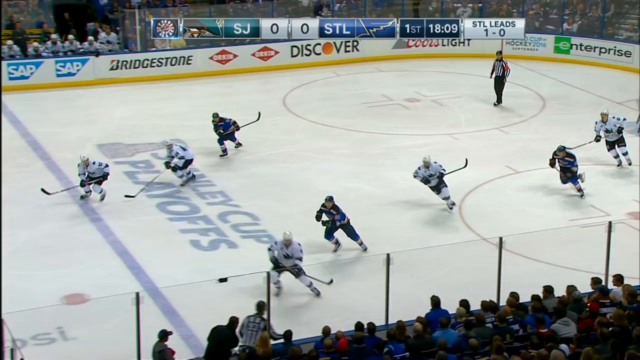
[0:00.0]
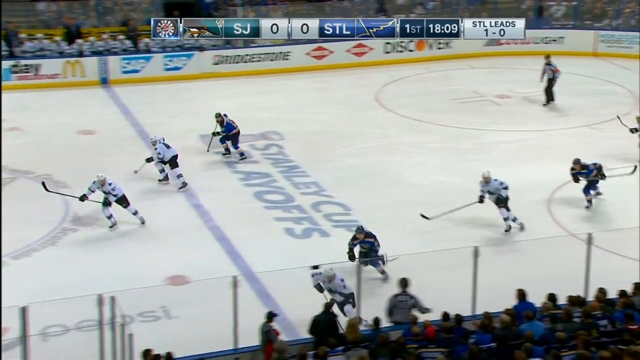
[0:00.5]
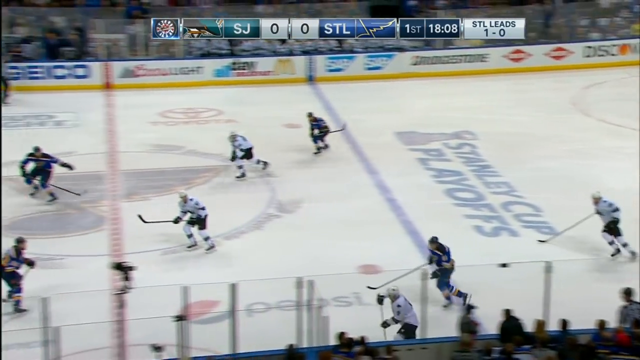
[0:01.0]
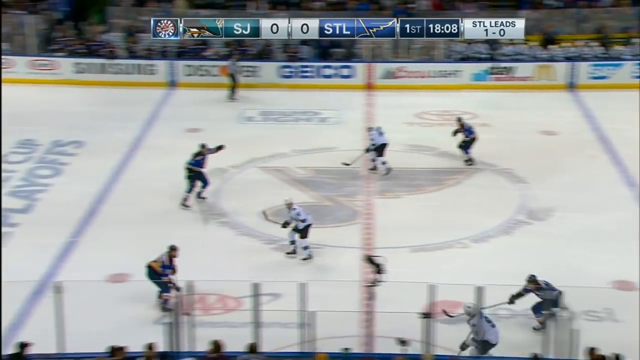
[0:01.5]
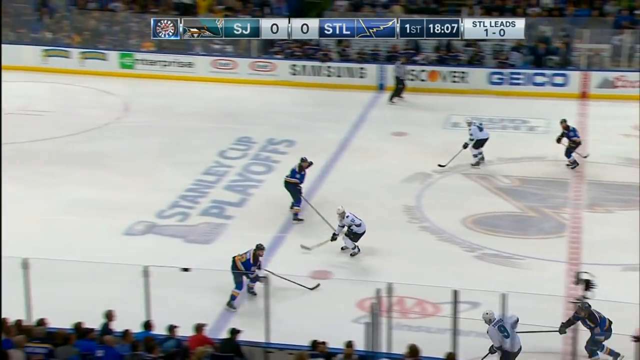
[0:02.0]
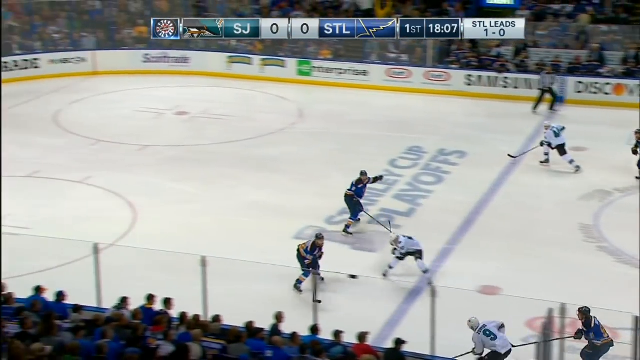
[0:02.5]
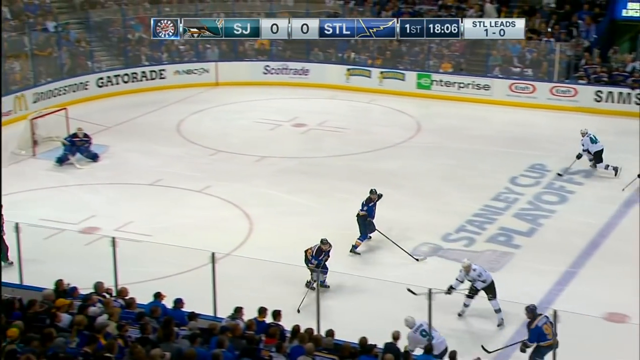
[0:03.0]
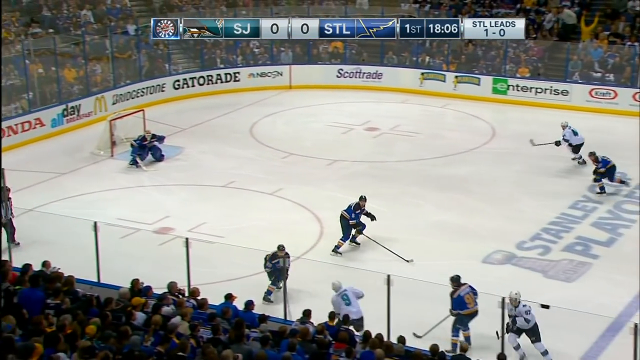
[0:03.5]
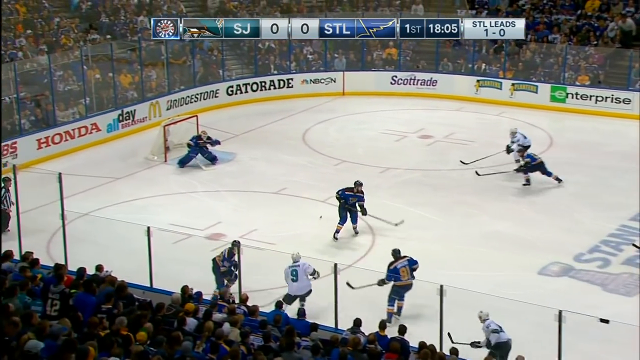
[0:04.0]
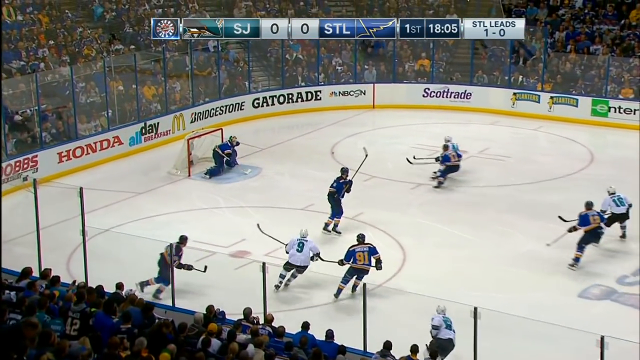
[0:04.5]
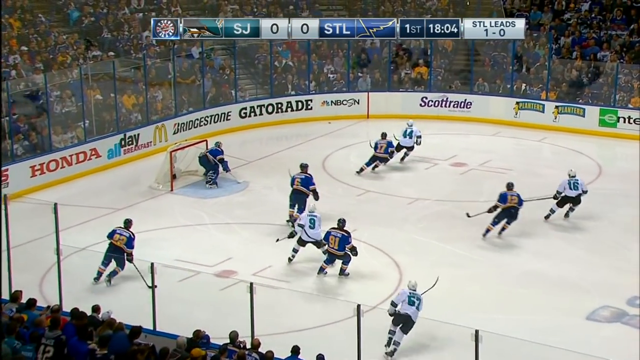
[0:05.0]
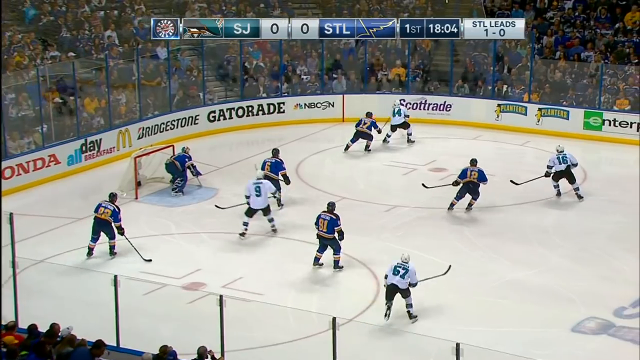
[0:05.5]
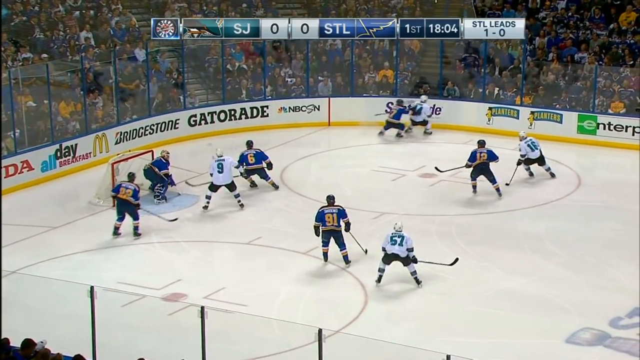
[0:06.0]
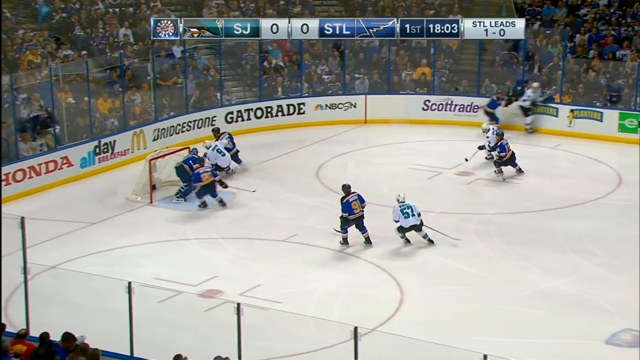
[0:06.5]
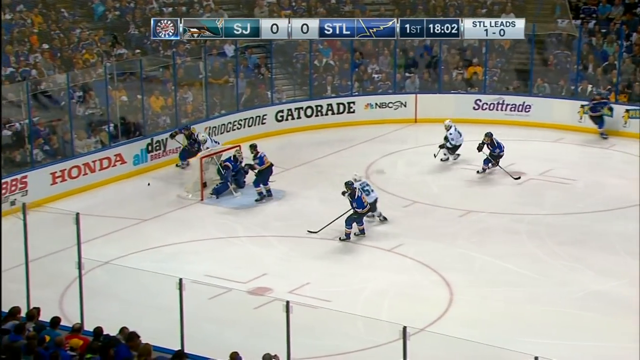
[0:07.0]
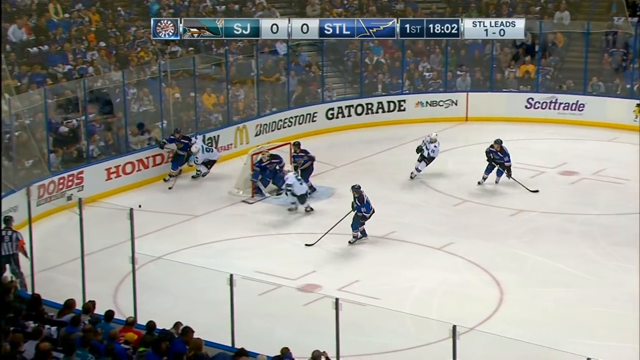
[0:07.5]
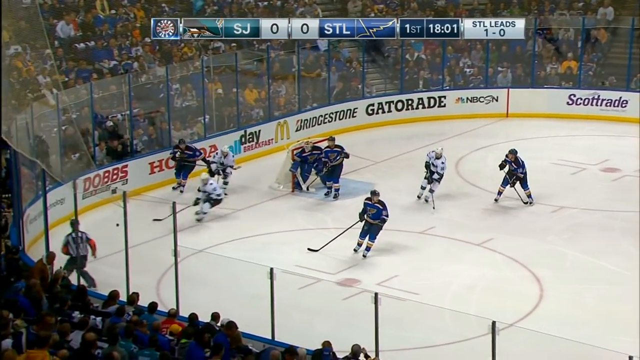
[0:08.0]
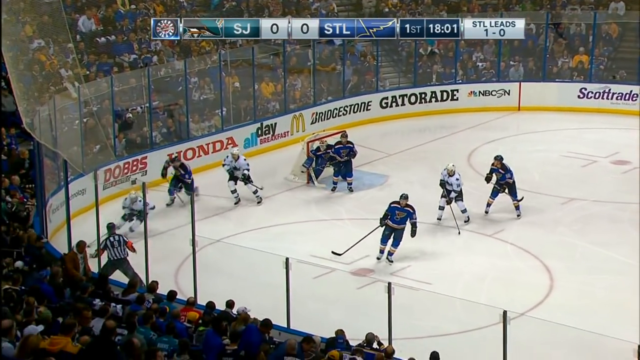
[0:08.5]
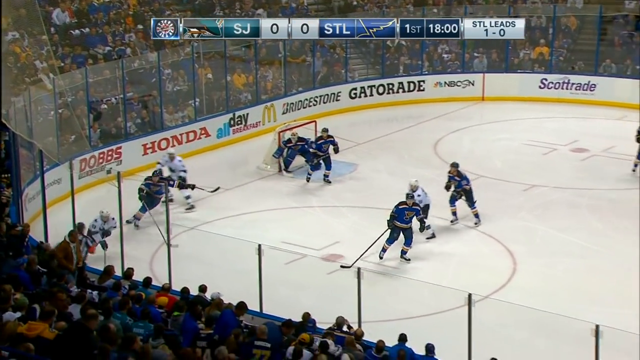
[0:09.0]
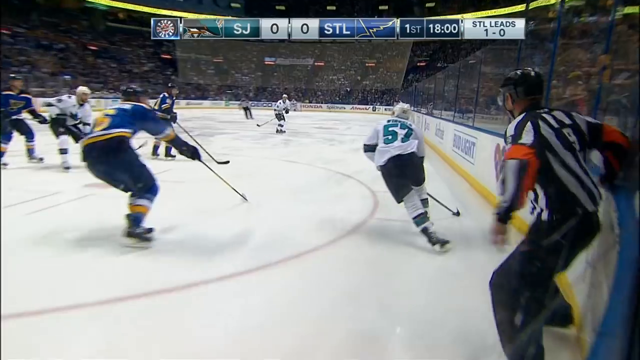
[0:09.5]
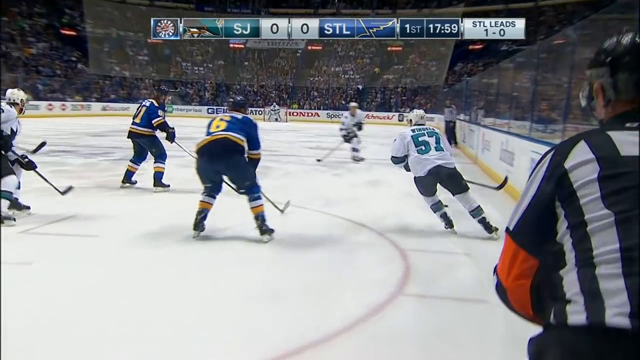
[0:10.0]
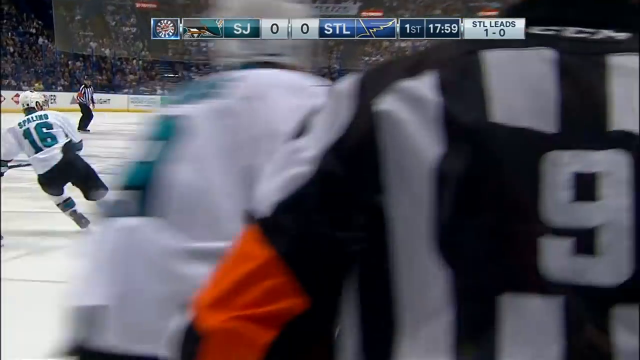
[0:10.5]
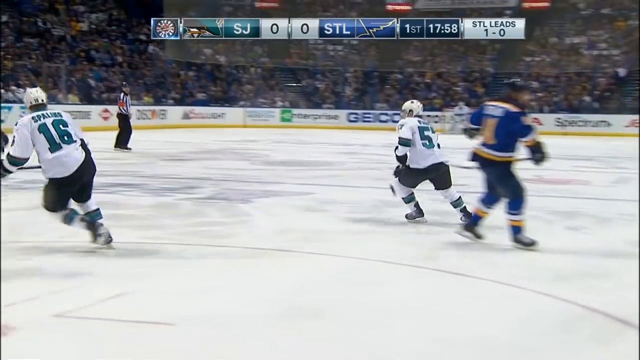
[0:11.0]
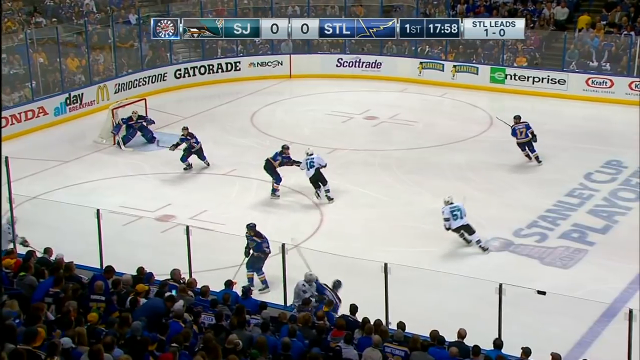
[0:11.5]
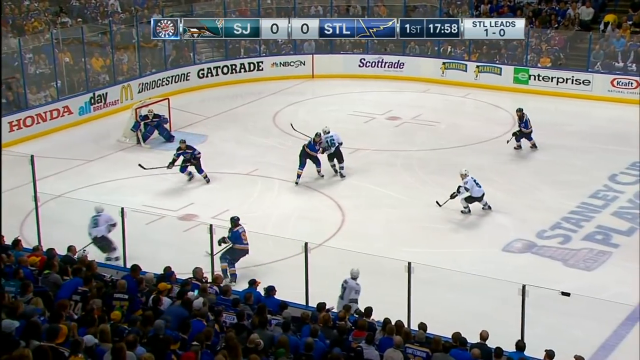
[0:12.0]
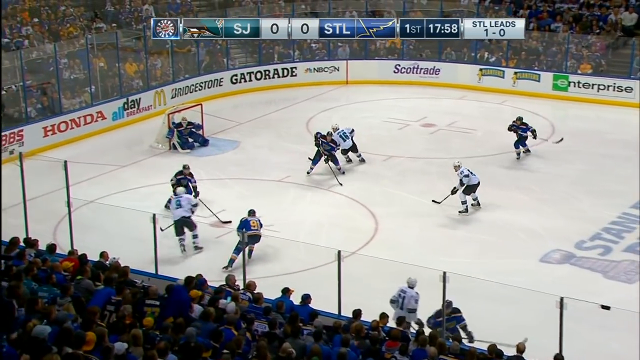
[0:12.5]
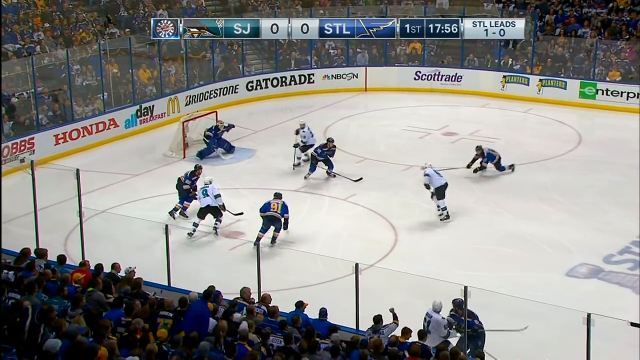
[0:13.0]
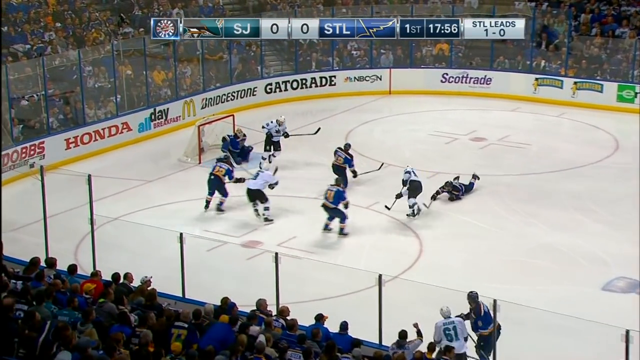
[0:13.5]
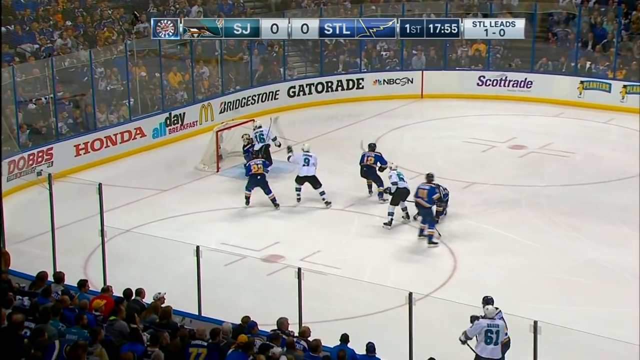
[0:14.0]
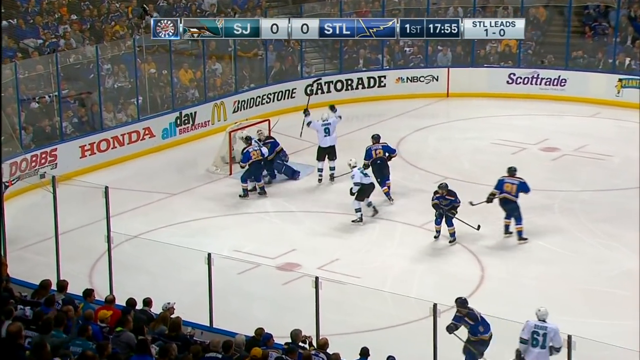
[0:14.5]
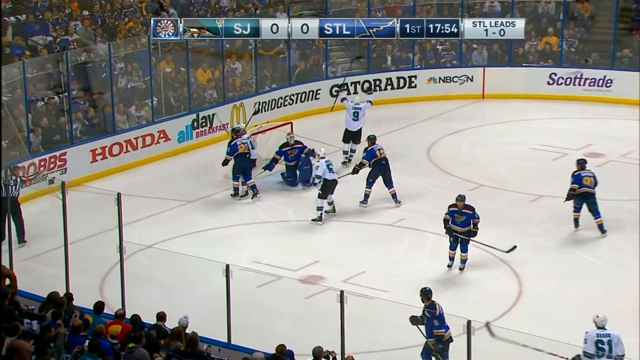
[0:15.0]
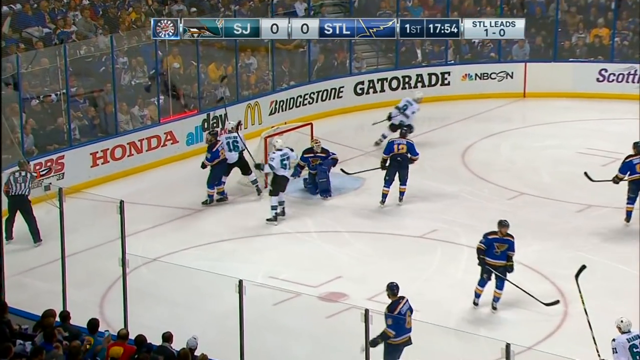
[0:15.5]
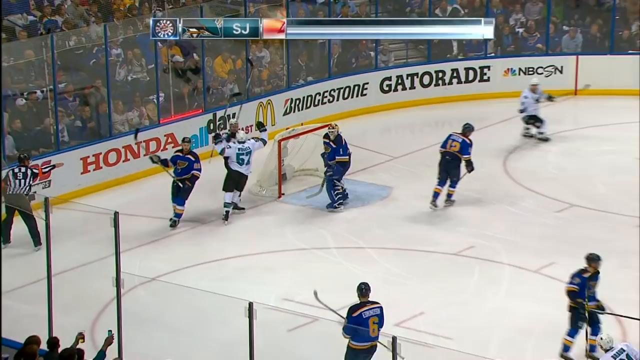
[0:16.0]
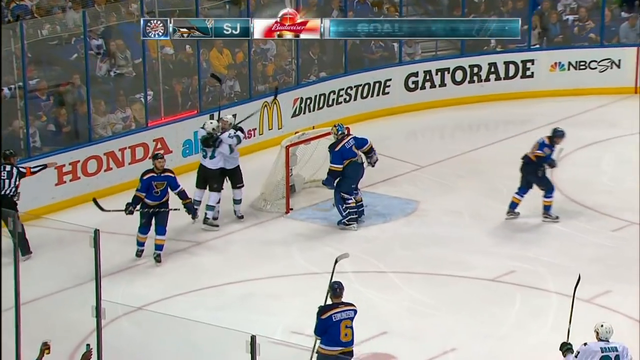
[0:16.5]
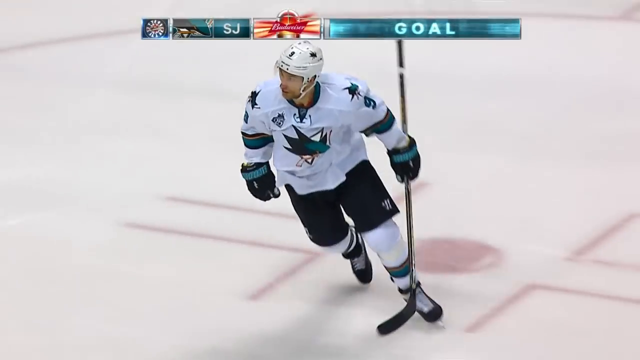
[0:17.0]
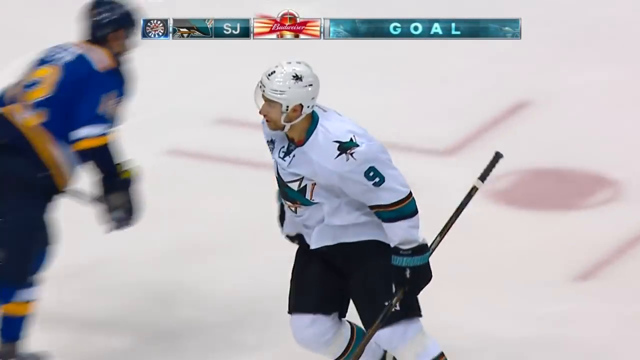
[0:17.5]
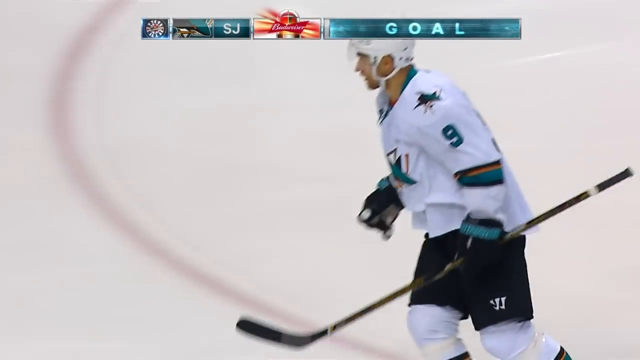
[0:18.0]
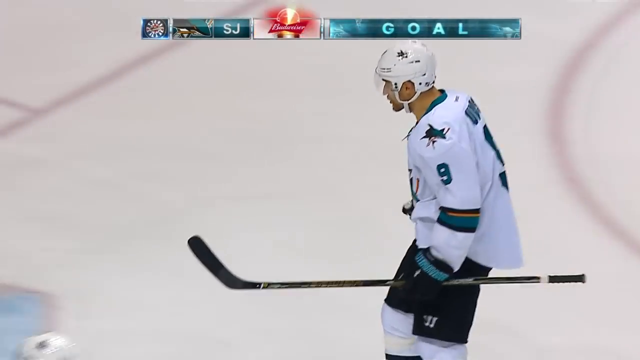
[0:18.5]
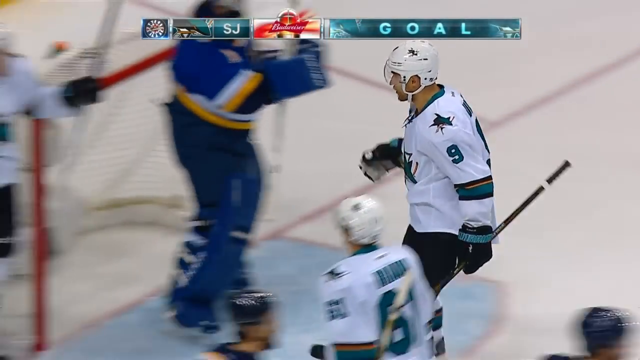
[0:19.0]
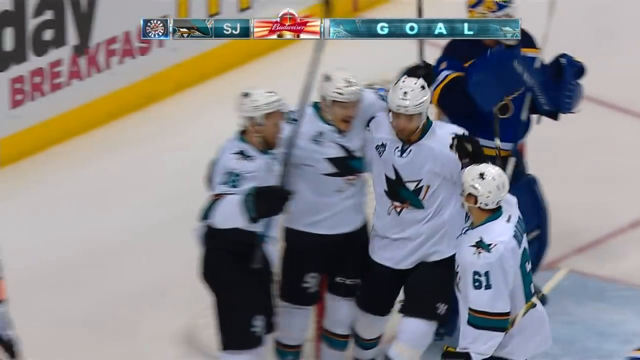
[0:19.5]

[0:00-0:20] Hockey players are on the ice: three players on the left, two of them in white jerseys. One player holds a hockey stick, angling it to the left, and another player has a hockey stick on the ice. The text "Stanley Cup playoffs" is on the ice. A referee is at the top right, and four hockey players at the bottom right skate forward. More players appear on the left, skating backwards. One player points a stick at someone in white, and the bottom player squats as they skate further backwards, while the person at the bottom left is up. The player wearing number nine hits the puck and passes it, and someone in white comes in, takes the puck and skates from the bottom left. Another angle from the back side shows number 57. The puck is passed to someone on the right, and a player jumps forward and shoots into the net, scoring a goal. Two players in white hug each other, and a player in a white helmet comes over, cheering "yeah," and joins a group hug with other players in white.